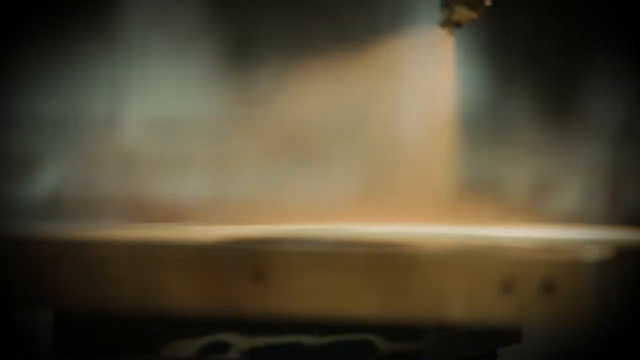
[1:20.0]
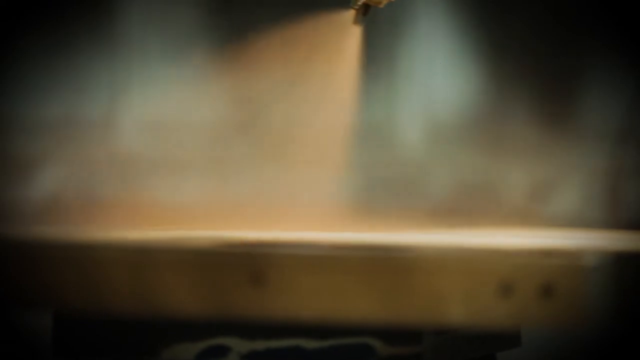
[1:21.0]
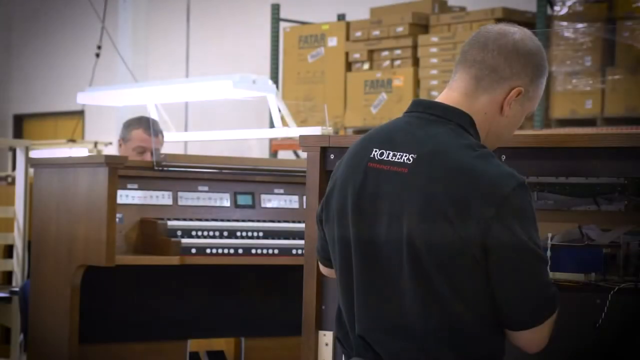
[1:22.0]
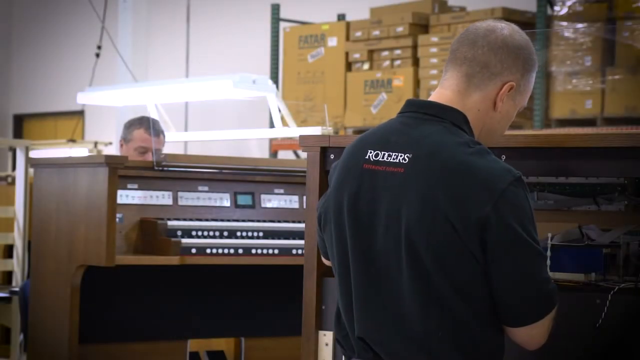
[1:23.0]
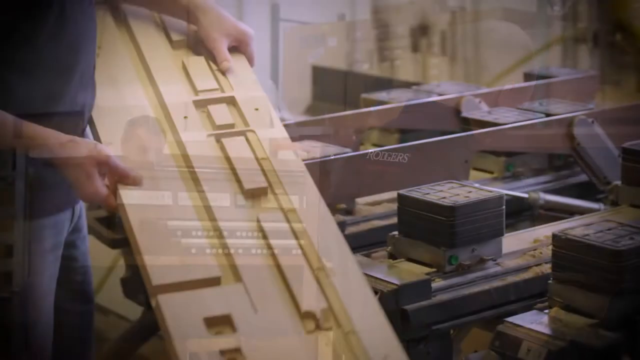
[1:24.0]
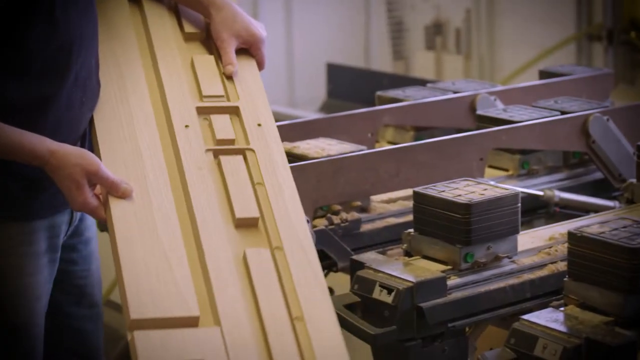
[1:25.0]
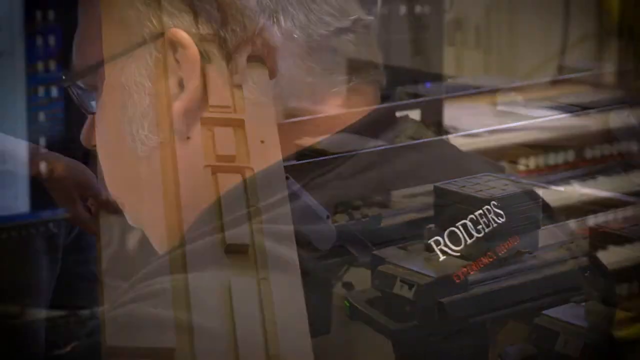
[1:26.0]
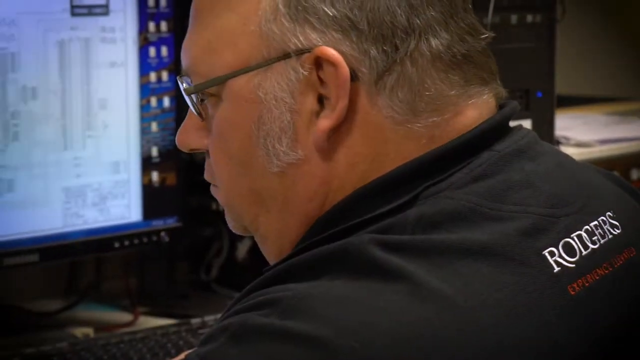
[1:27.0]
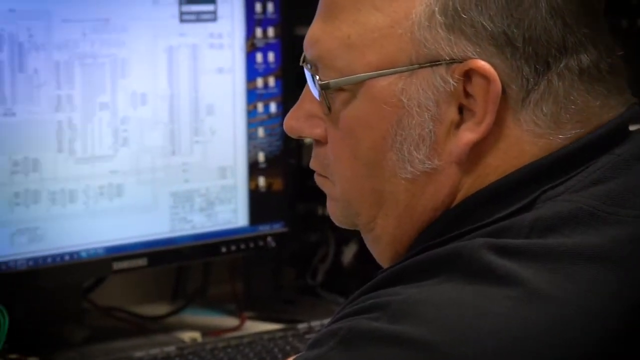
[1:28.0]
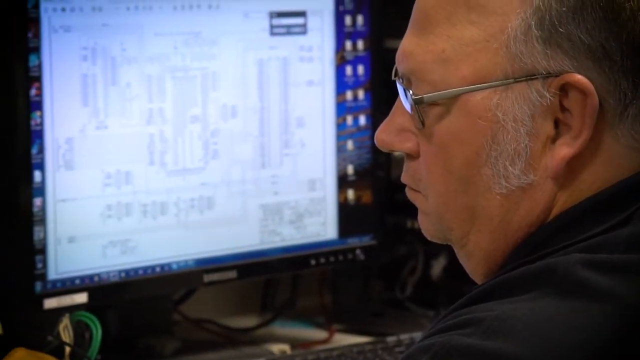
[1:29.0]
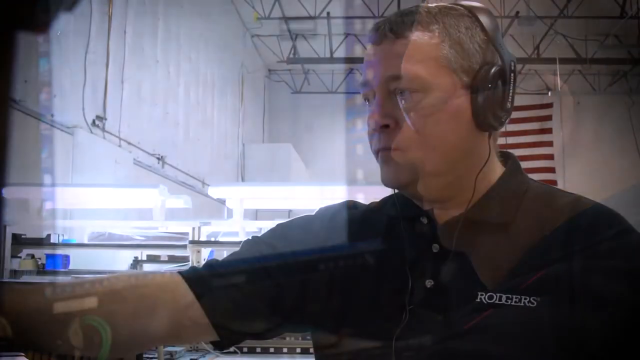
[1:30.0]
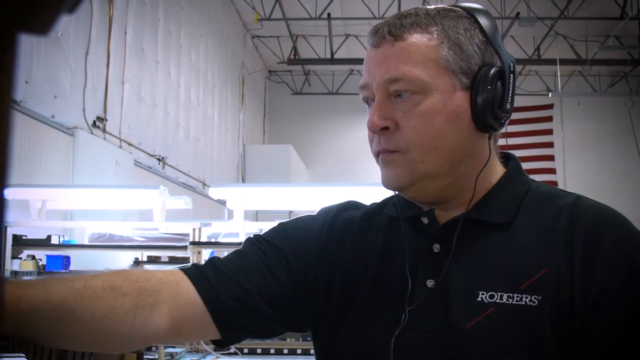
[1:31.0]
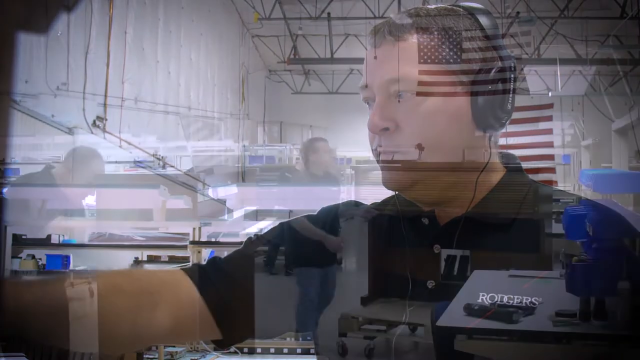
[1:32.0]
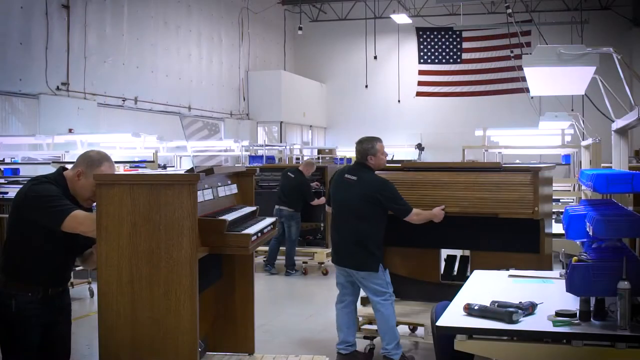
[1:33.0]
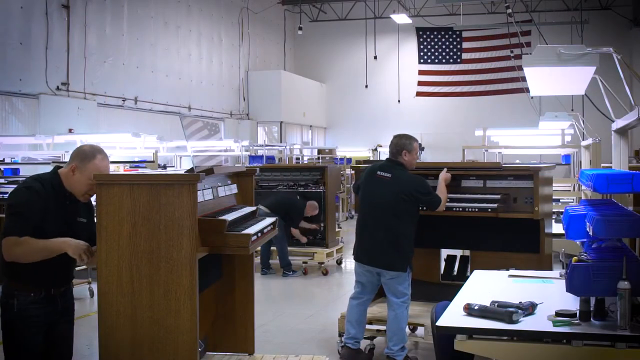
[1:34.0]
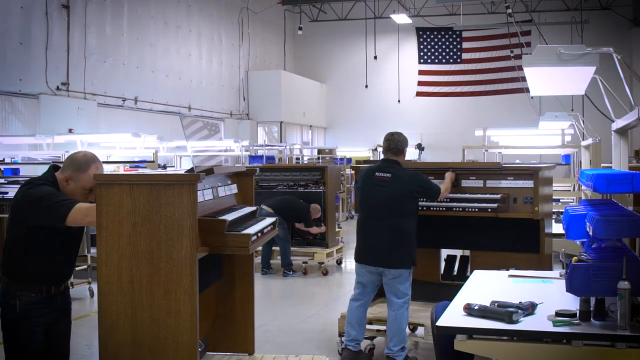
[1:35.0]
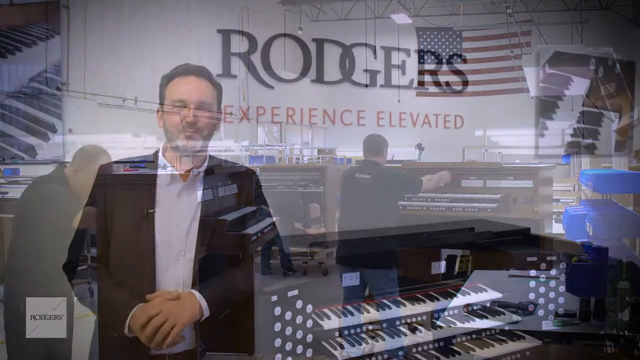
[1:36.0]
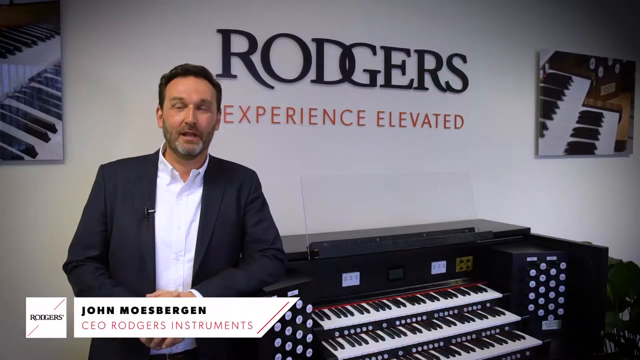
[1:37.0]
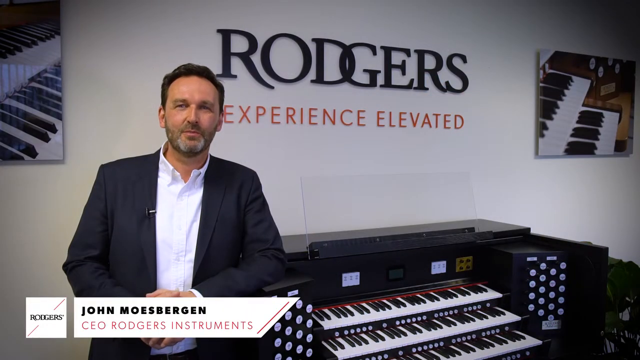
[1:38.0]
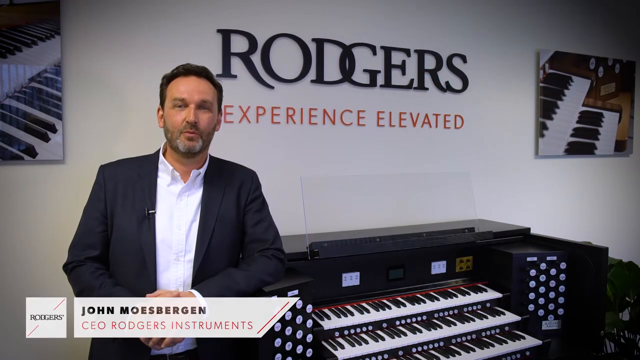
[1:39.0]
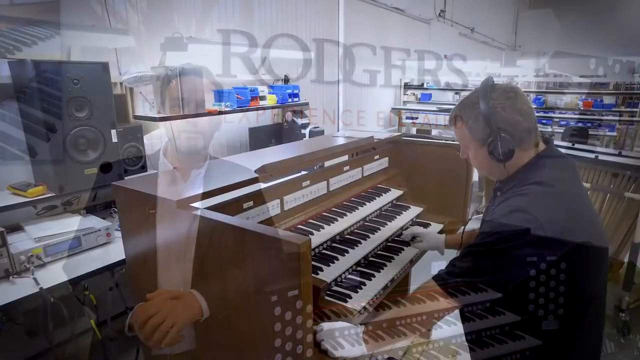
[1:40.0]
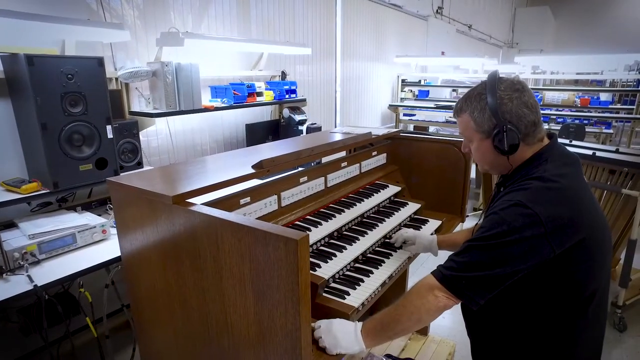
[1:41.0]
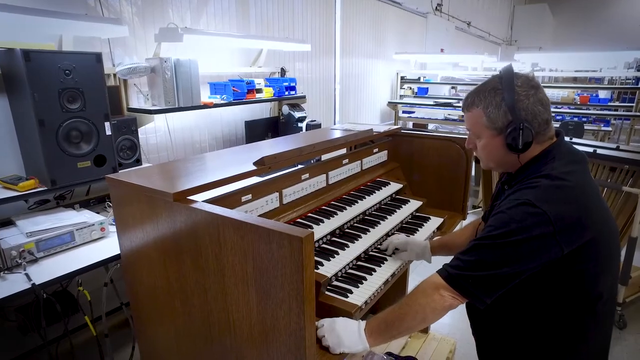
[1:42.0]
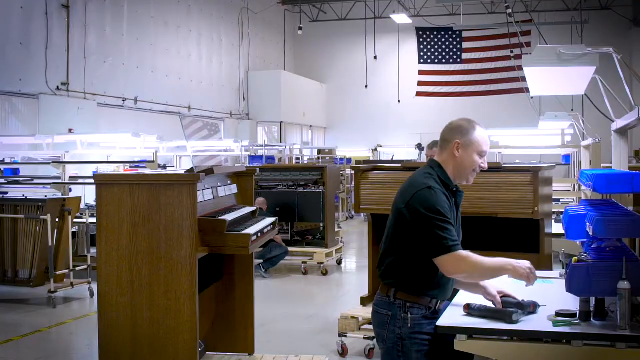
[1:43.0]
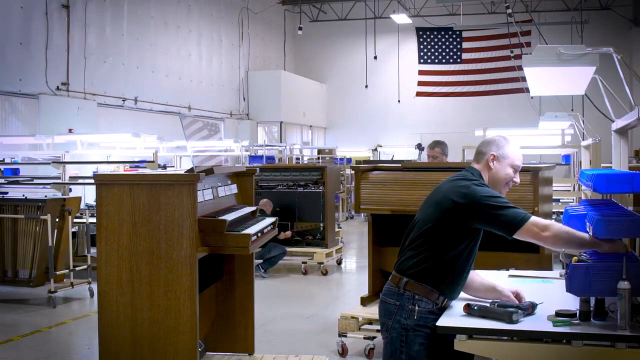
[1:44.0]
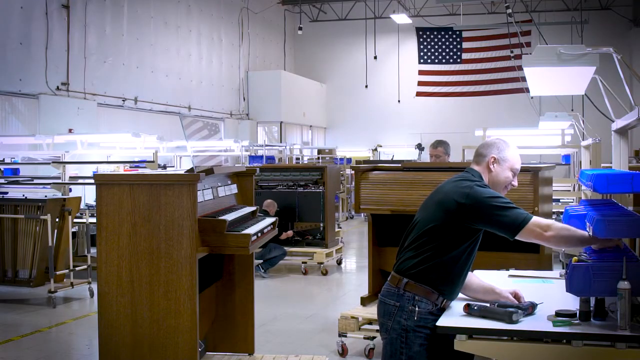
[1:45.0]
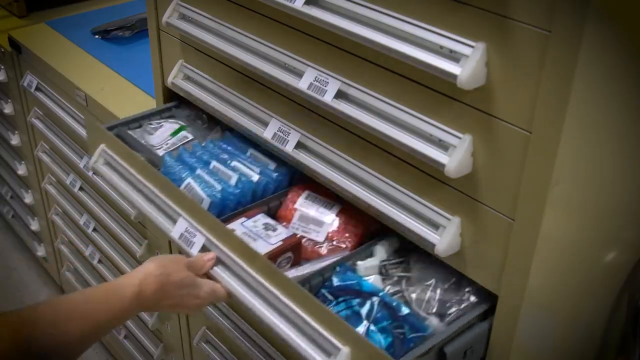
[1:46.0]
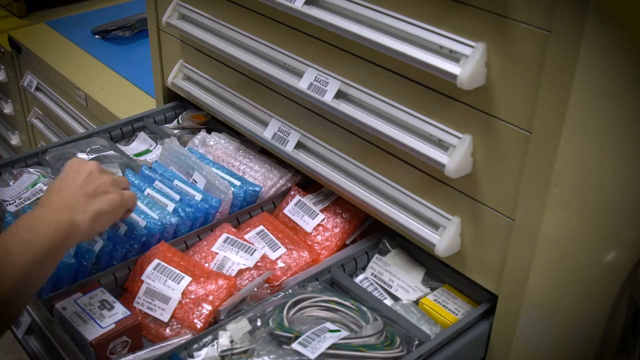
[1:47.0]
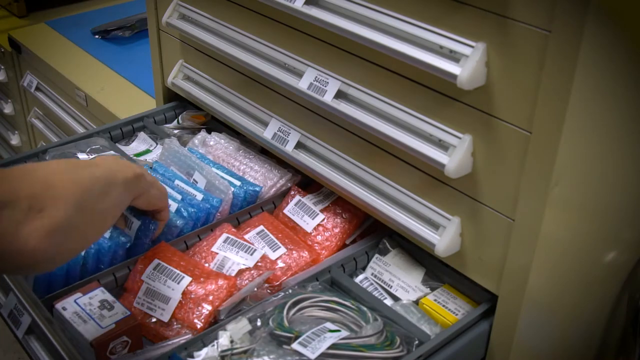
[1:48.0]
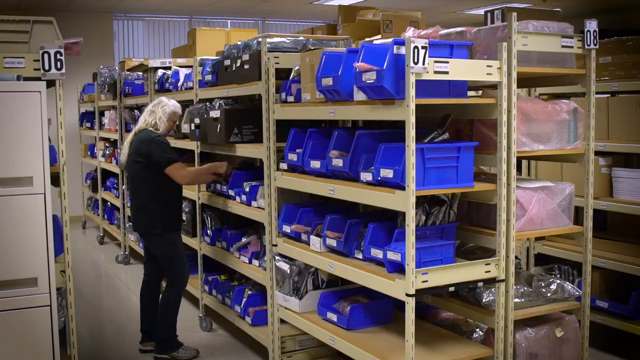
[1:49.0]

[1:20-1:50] A plank of wood is on the lower part of the screen, and above it a machine sprays air or water over it as dust rises up. The image changes to two workers: one has his back to the camera and wears a black shirt with the name "Rodgers" in white on the back; the other, on the left side of the screen, is behind an organ, with only his face visible from the nose up. Next a man on the right, seen only from the shoulders down, holds a large piece of wood and aims it toward the camera. Then an older, heavier man in a black shirt with the word "Rodgers" across the back in white sits at a computer, looking at a complex diagram on the screen. Another man, also on the right side, stares intently at a computer screen with headphones over his ears. Then comes the floor of a warehouse or factory, where three men are visible, each working on an organ that is upright on the floor. A man stands on the left side of the screen, leaning against an organ; the wall behind him says "Rodgers, experience elevated", and a tag under him identifies him as "John Moesbergen, CEO Rodgers Instruments". A man with a gloved hand tests an organ by playing it, and the view returns to the men working at the organs on the shop floor. Someone opens a tall case containing bags of blue, red and white plastic items. Then a blonde woman stands in front of a row of bins, picking up items.